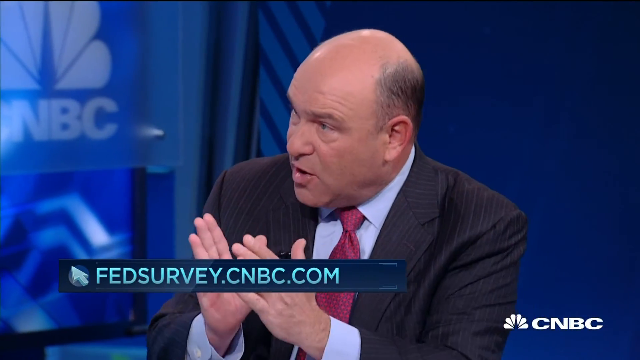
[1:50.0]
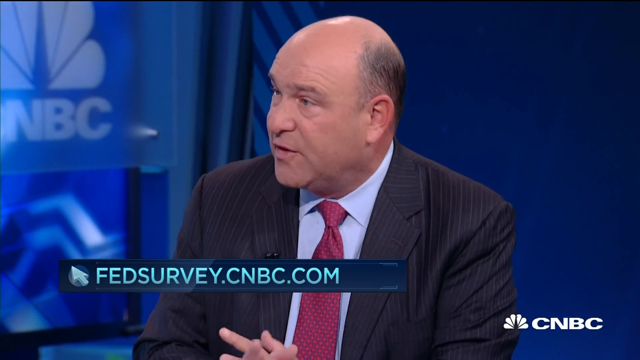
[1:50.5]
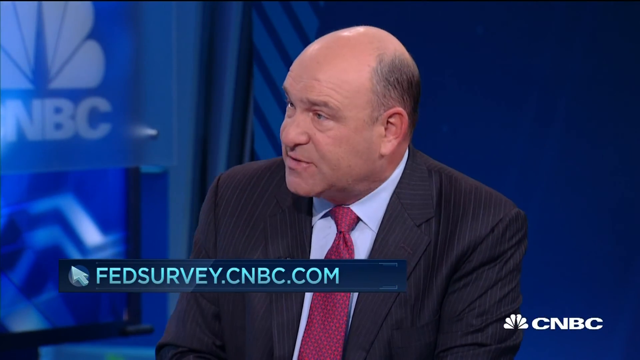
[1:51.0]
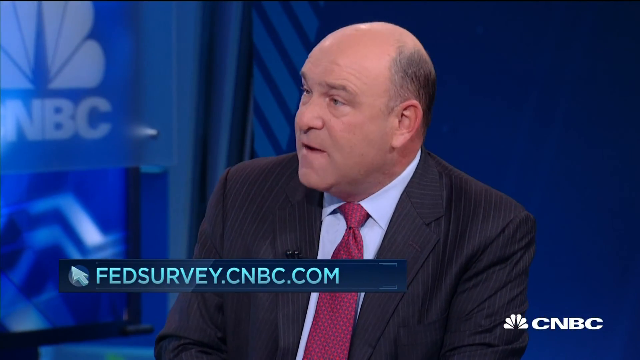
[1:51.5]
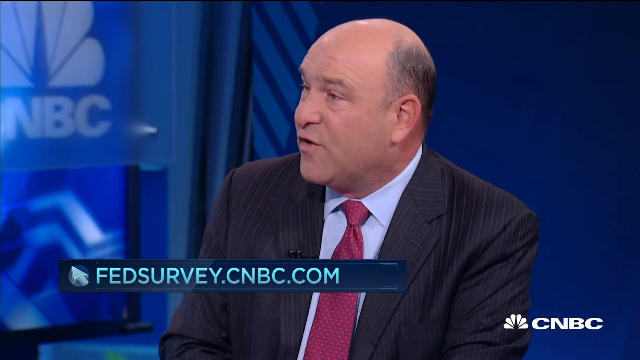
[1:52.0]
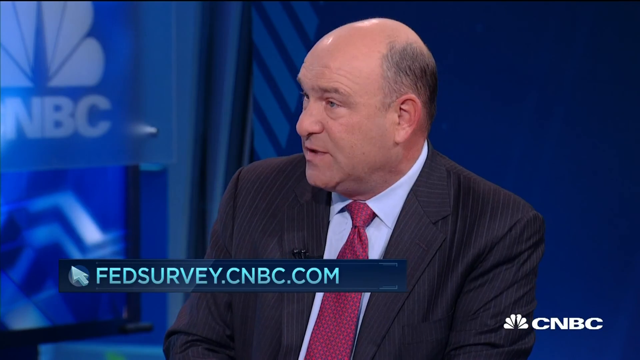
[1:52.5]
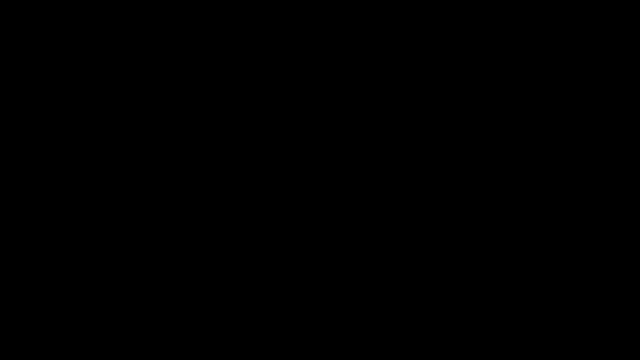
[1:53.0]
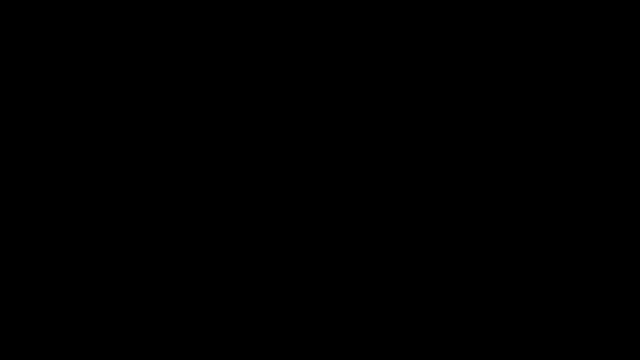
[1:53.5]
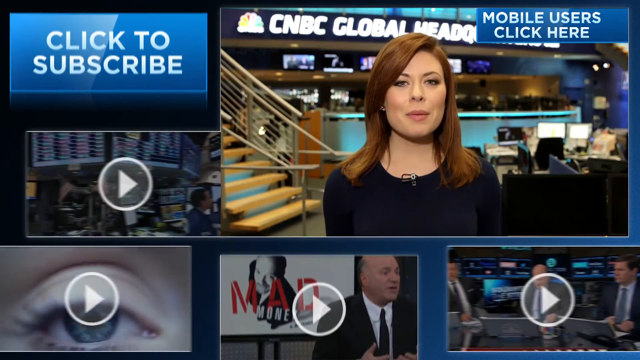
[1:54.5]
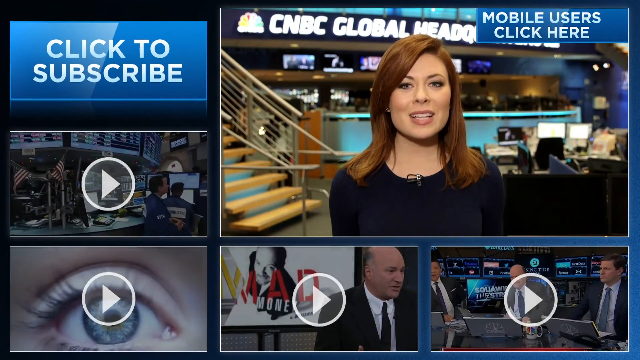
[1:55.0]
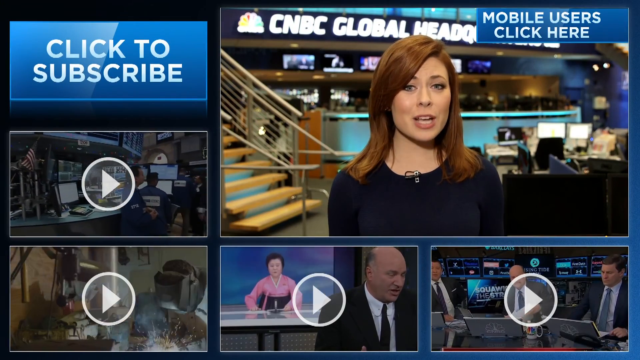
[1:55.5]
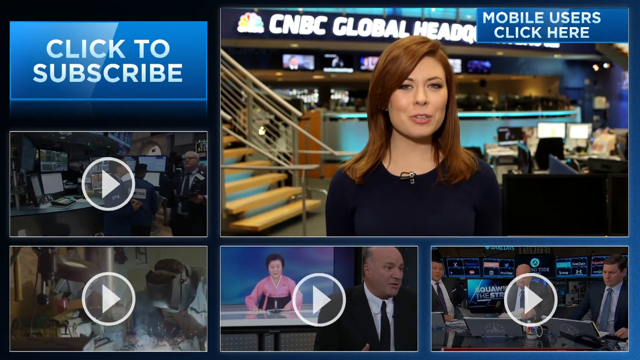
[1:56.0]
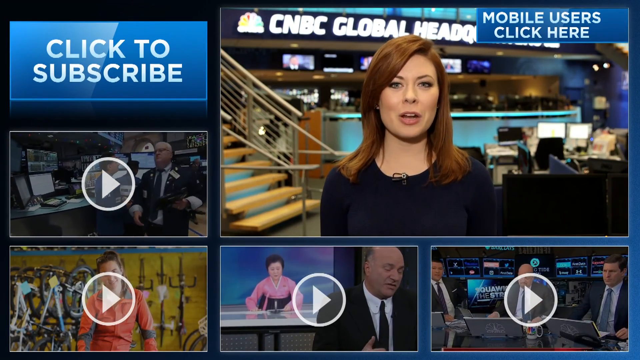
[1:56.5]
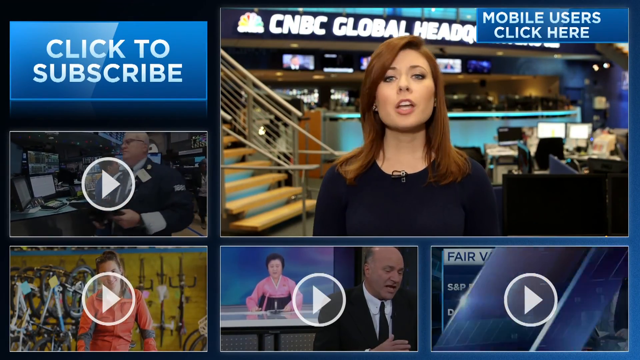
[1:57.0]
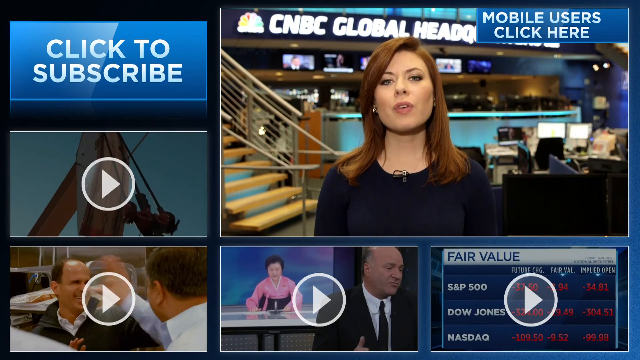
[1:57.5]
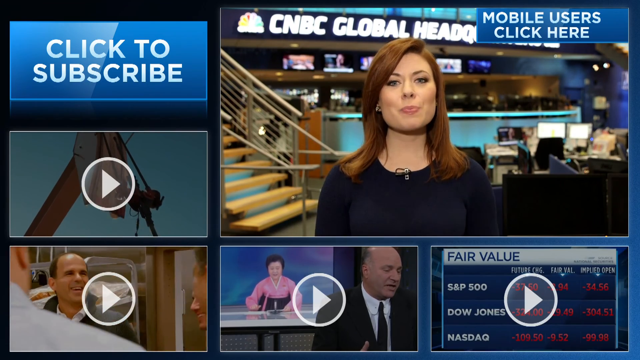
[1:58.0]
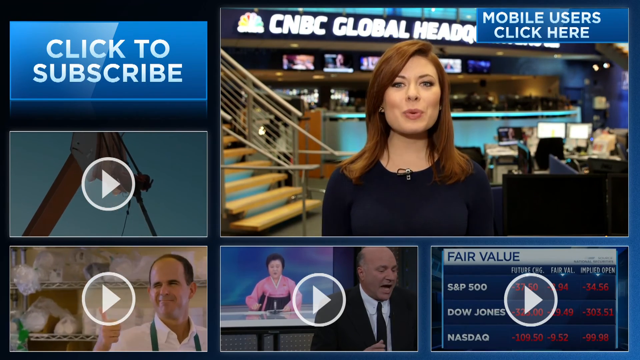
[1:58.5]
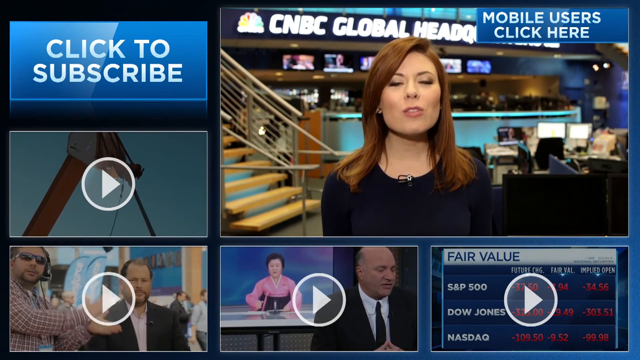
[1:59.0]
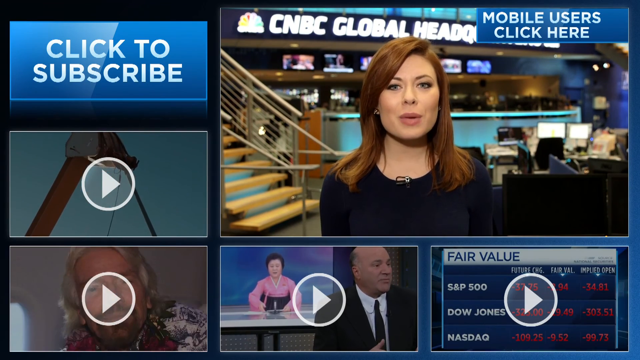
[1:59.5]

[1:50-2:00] "fedsurvey.cnbc.com" appears. The bald-headed man in the navy blue suit is seen again, wearing a sky blue shirt and a wine tie and making gestures with his hand; he definitely looks like he is speaking to someone. A woman in black with long hair is seated, as if in an office, facing the camera, with "CNBC Global headquarters" written behind her. At the top right of the screen is "mobile users click here", and "click to subscribe" is at the top left. A set of about four smaller videos appears. One shows the bald-headed man and another woman in what looks like a Korean robe. Then the bald-headed man is flanked on the right and left by other men who are not bald-headed, and he is definitely talking with about two other people in the same office. The woman is talking, and "fair value", "S&P 500", futures and fair value figures are shown. Another video shows some men chatting and talking.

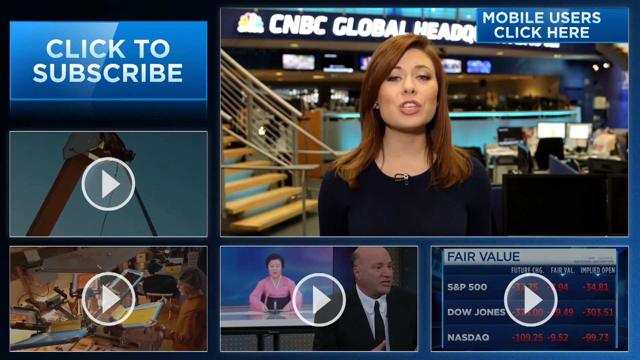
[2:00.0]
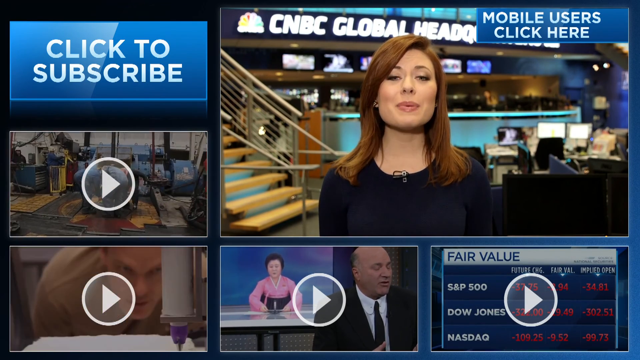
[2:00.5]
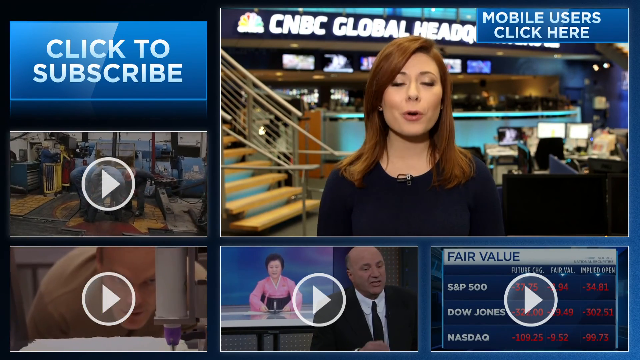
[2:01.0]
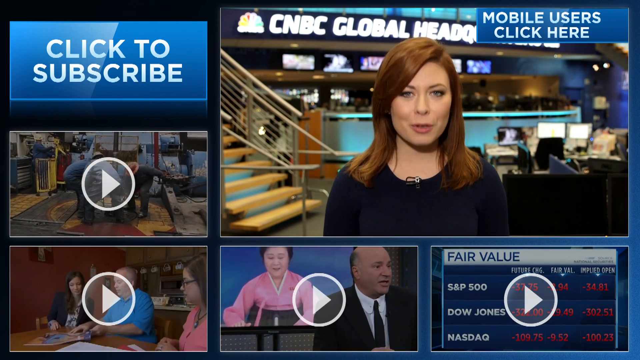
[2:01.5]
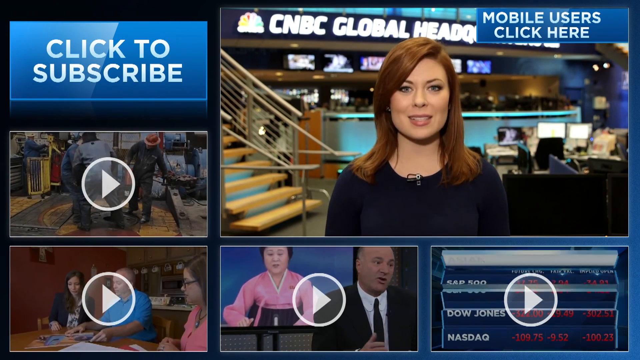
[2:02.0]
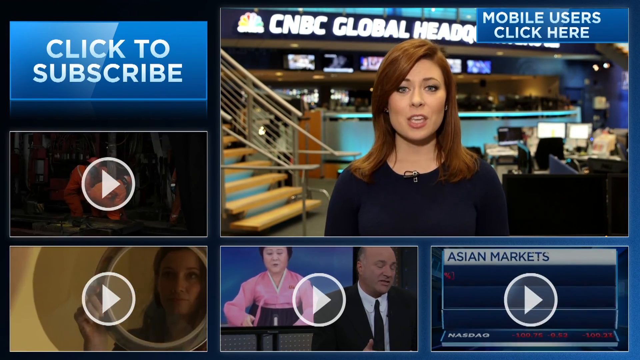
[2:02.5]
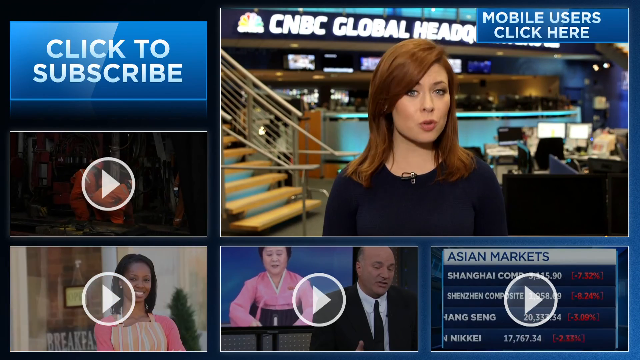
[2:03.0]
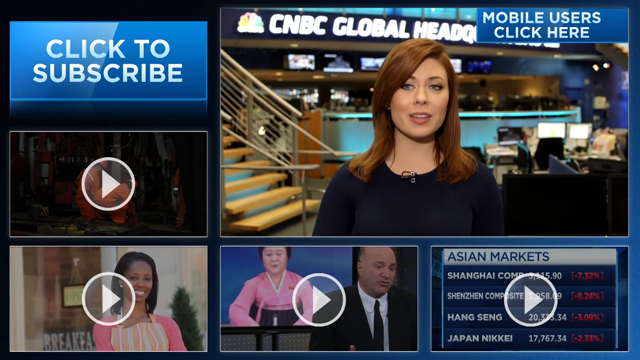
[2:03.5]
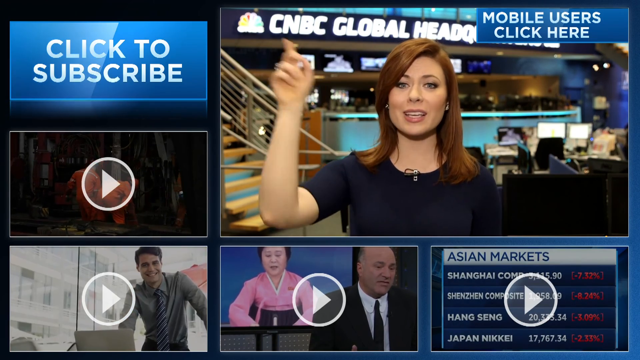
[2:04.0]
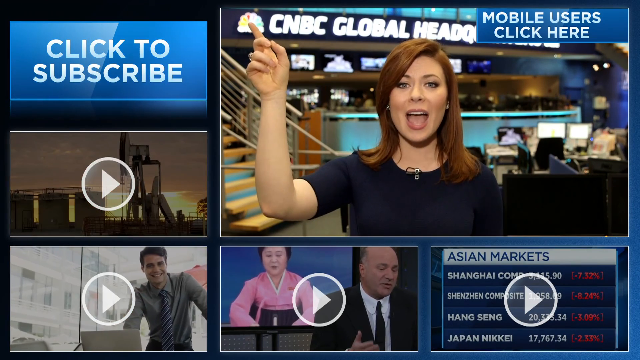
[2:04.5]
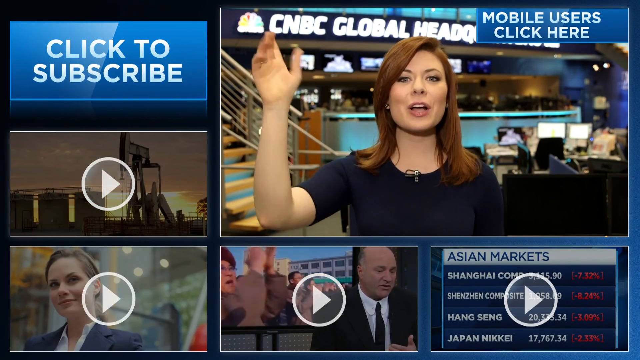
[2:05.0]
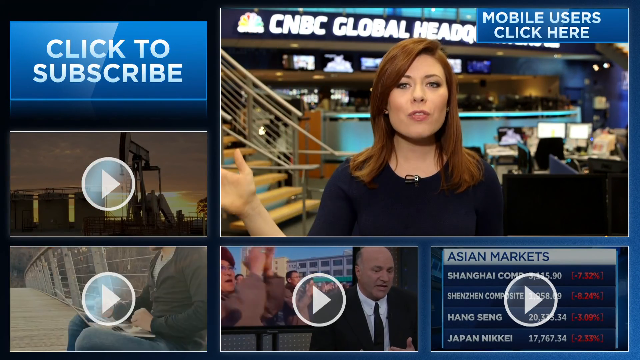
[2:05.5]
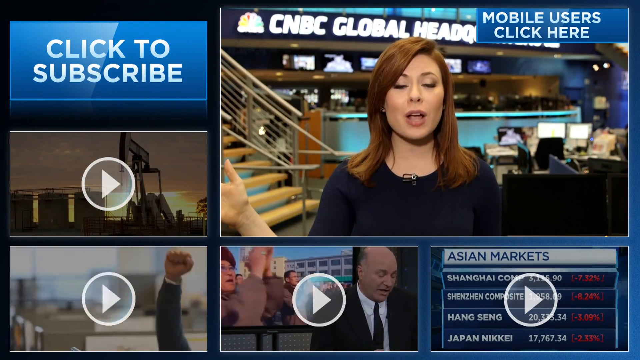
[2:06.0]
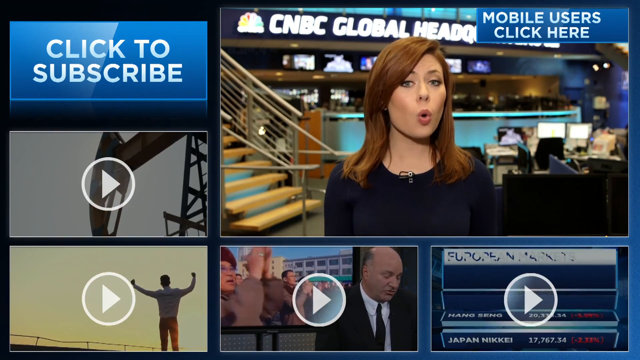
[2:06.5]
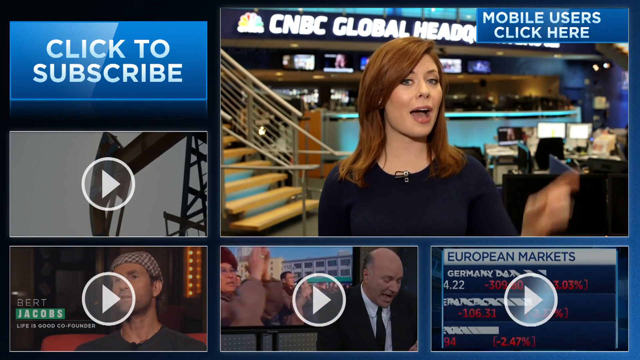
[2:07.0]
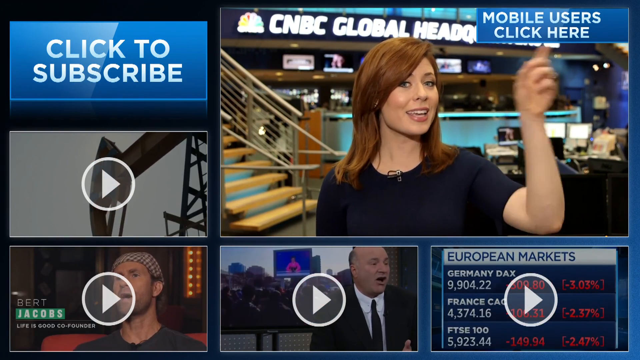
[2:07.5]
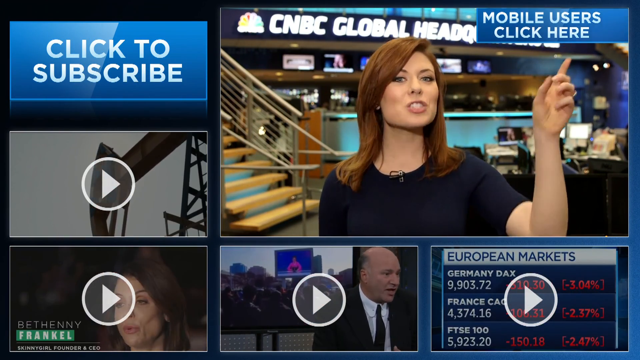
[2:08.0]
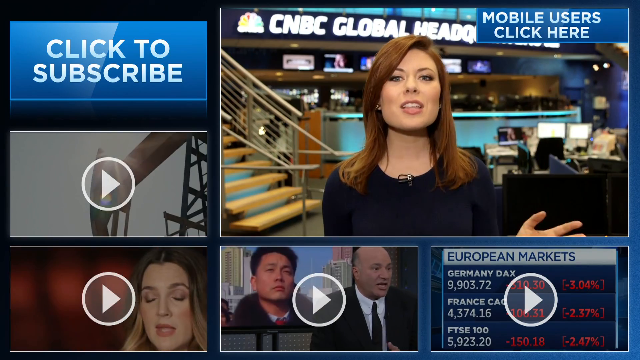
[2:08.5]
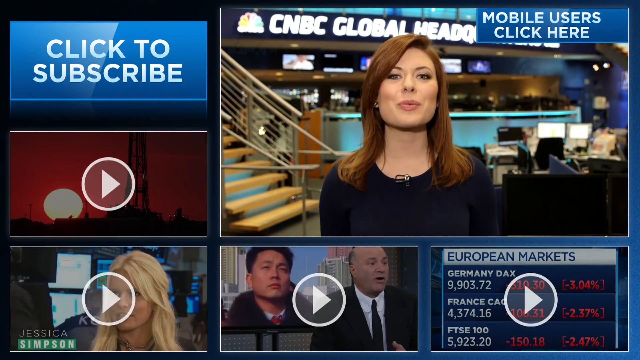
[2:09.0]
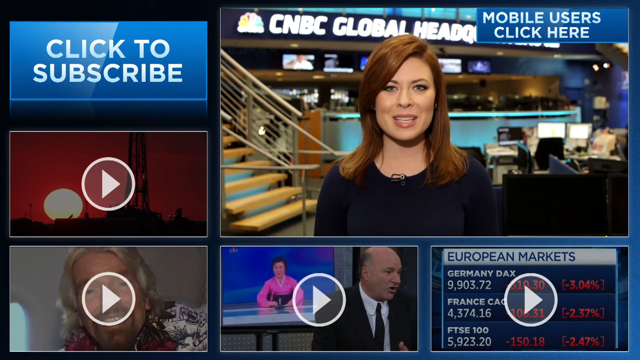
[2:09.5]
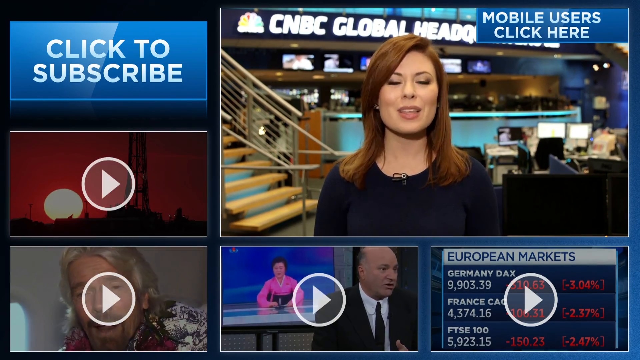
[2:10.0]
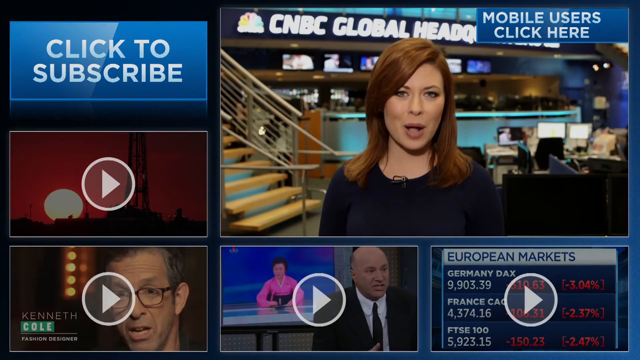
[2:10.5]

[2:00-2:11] A white woman with long hair in a black top, with a microphone attached at the center of the neck of her clothing, has text shown behind her. At the top right corner is "mobile users click here", and "fair value" appears at the bottom. The screen is split into about five subsections, and at the top right corner it says "click to subscribe". A video in the middle shows a Korean woman in a Korean robe, and the man in the middle is also talking. At the bottom right, an Asian market listing includes Shanghai and Shenzhen. Another woman is clapping her hands. The woman in the Korean robe is still talking, and the bald-headed man is also talking. The woman on the right screen makes gestures as she talks, raising her left hand first and then her right hand. Another video shows some machines working. A European market listing shows Germany "DAS 9903". Lots of activity goes on at the same time on the screen, with the Asian market and European market both displayed.